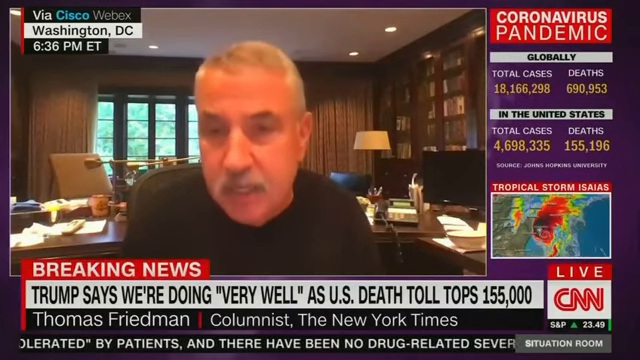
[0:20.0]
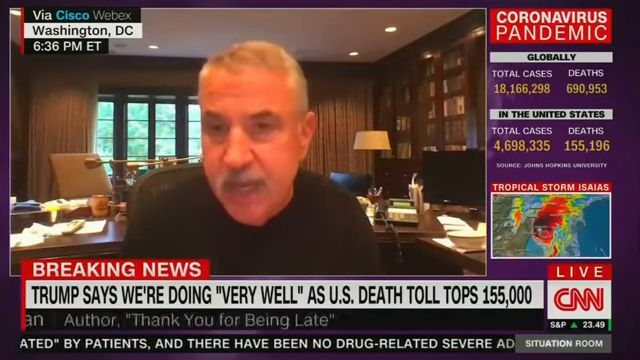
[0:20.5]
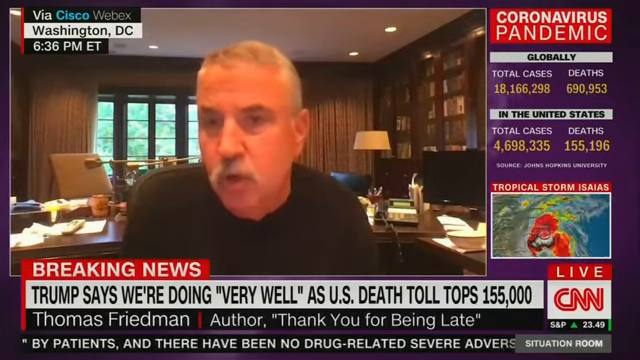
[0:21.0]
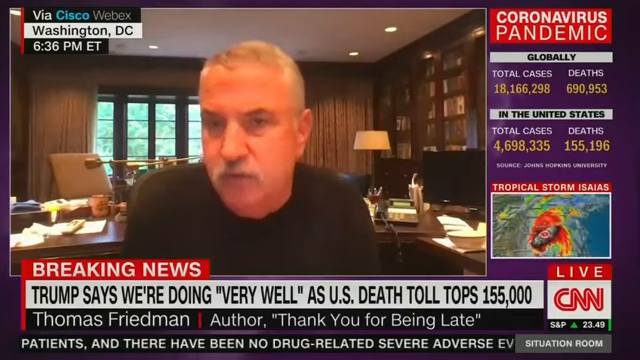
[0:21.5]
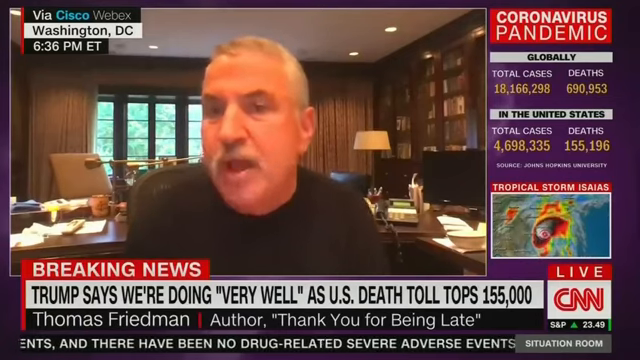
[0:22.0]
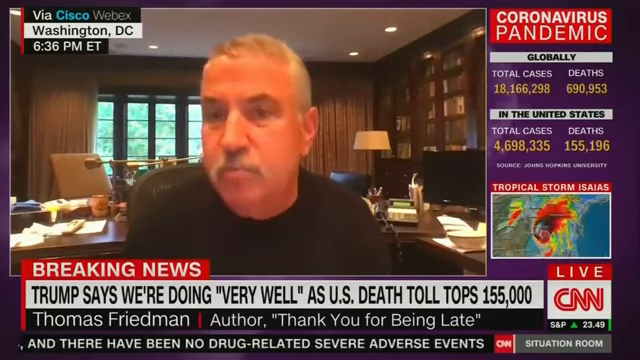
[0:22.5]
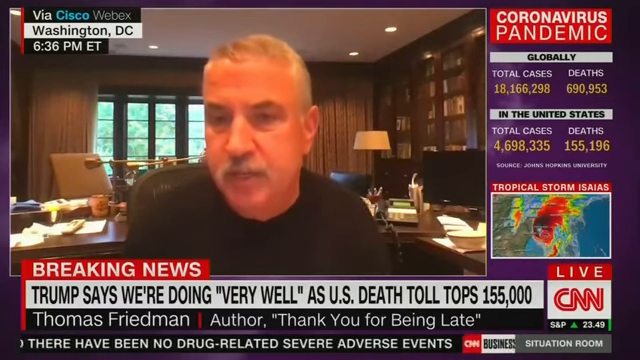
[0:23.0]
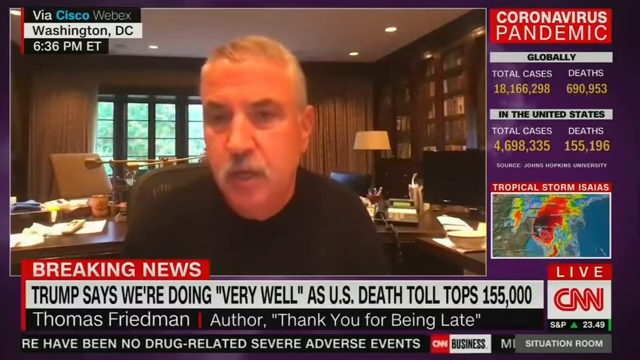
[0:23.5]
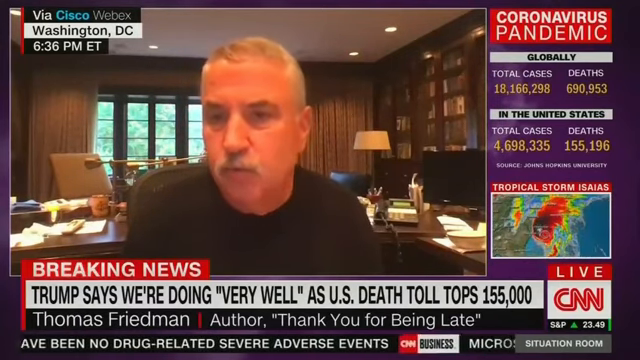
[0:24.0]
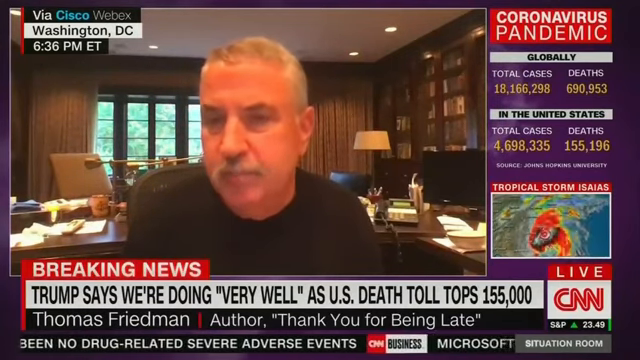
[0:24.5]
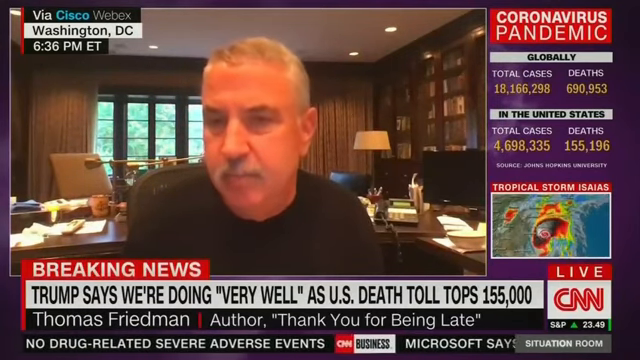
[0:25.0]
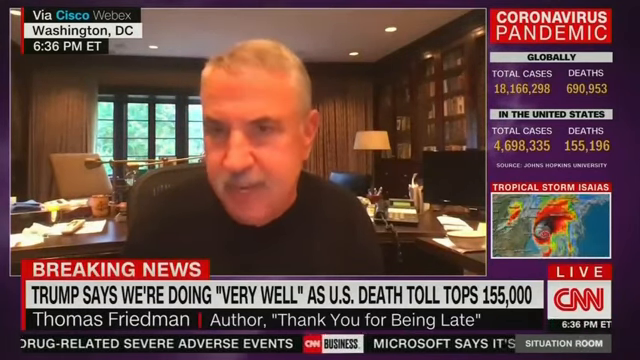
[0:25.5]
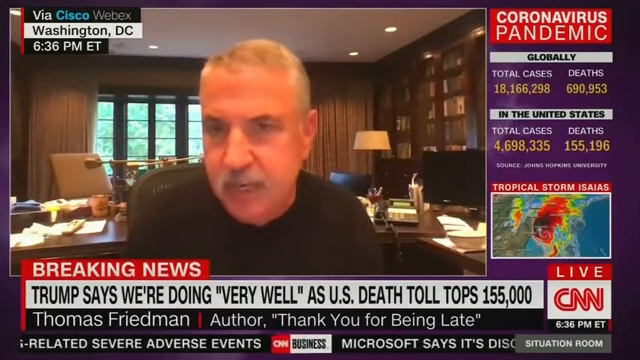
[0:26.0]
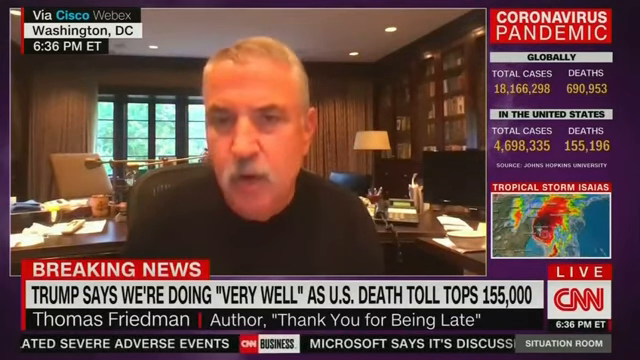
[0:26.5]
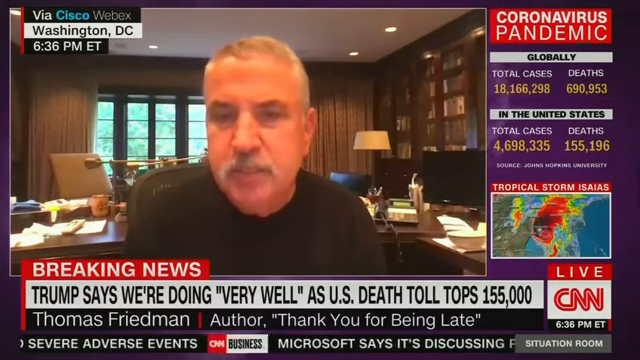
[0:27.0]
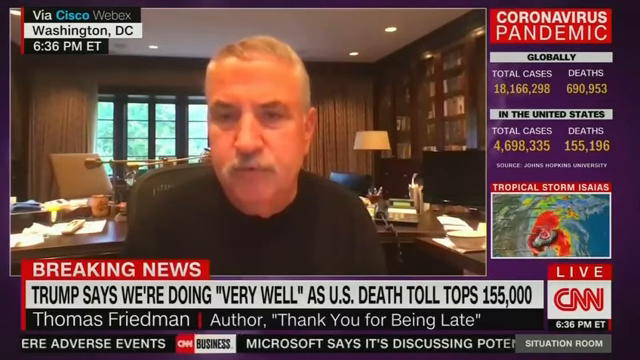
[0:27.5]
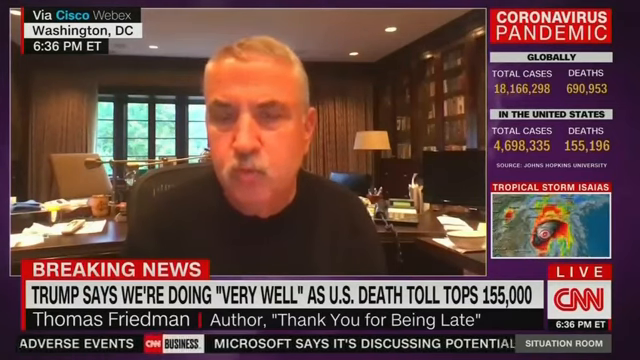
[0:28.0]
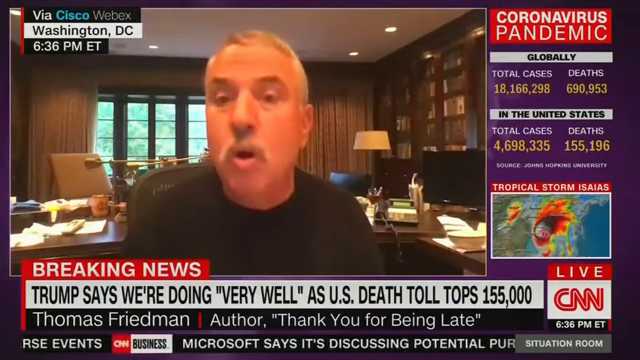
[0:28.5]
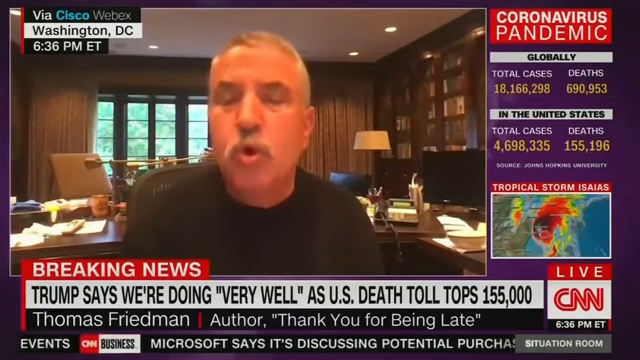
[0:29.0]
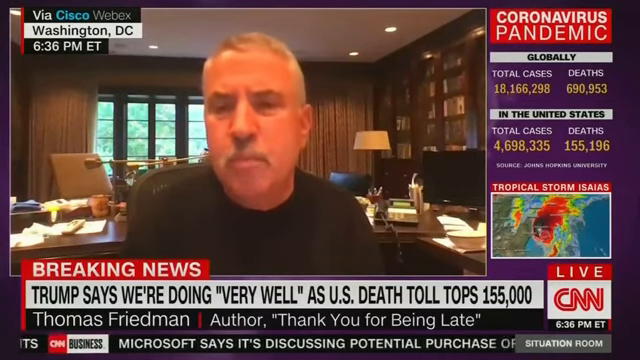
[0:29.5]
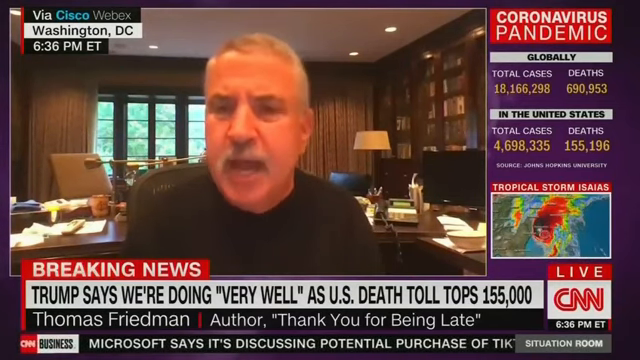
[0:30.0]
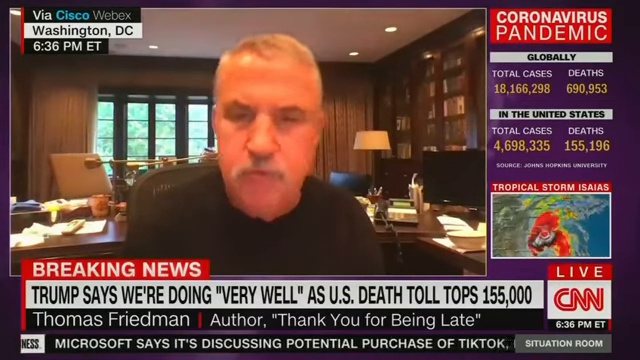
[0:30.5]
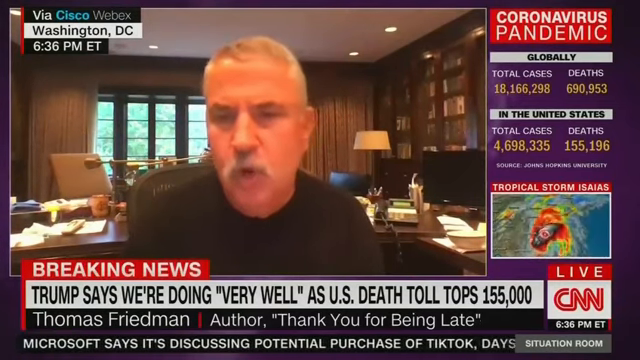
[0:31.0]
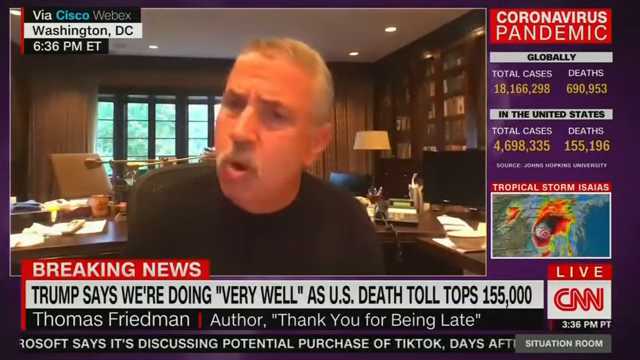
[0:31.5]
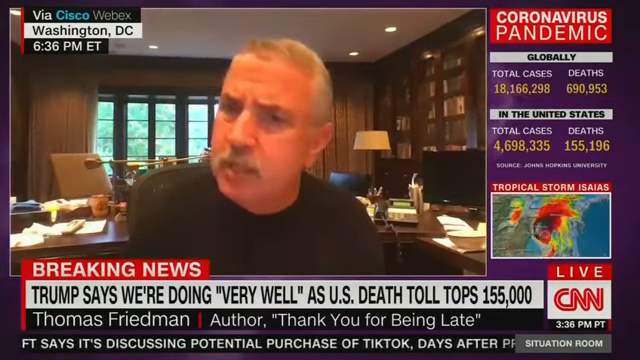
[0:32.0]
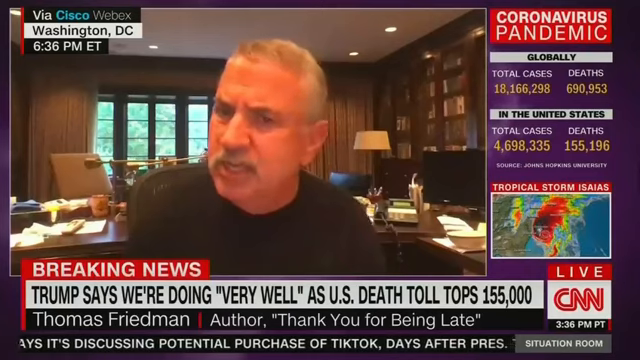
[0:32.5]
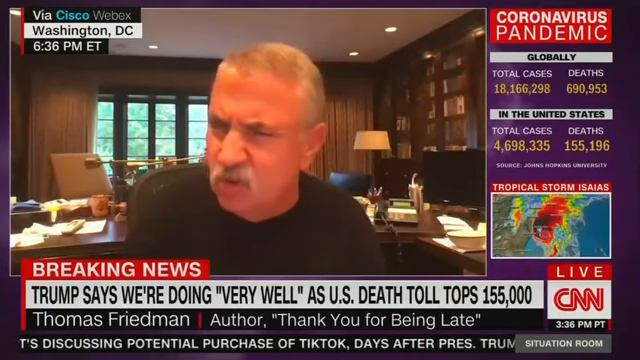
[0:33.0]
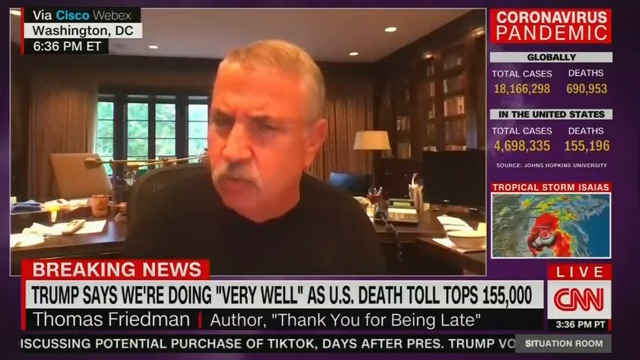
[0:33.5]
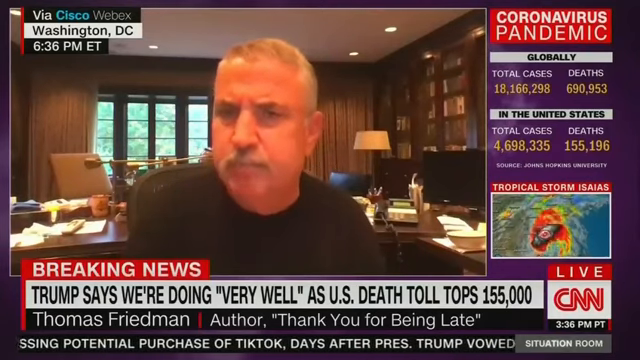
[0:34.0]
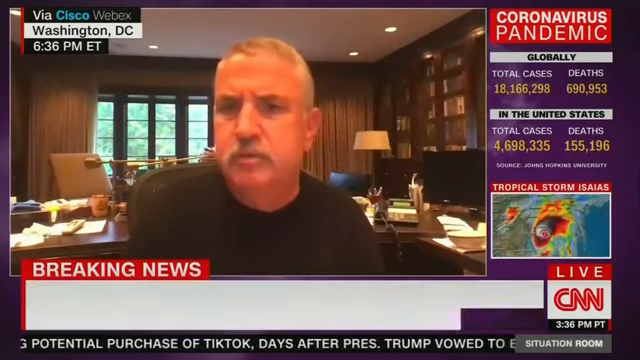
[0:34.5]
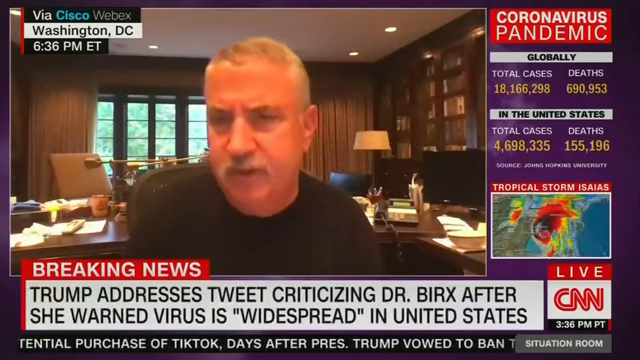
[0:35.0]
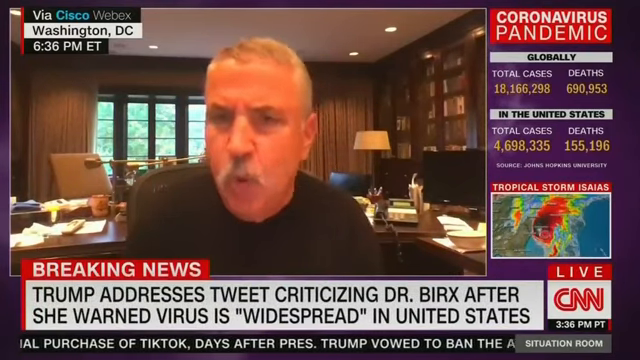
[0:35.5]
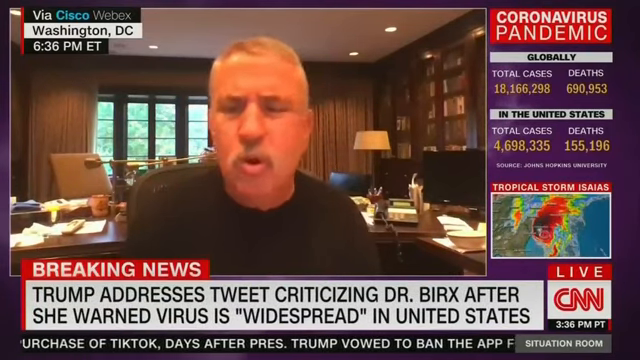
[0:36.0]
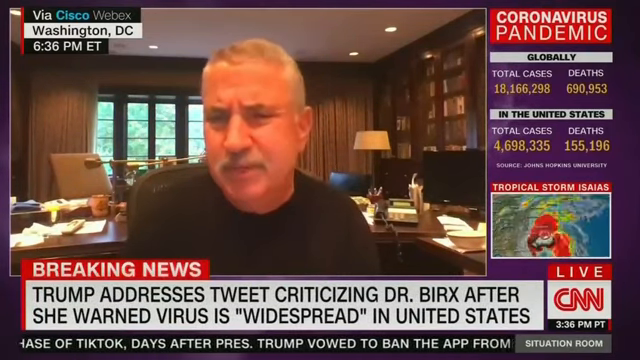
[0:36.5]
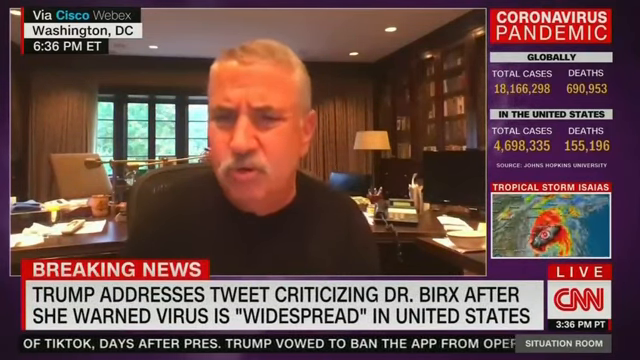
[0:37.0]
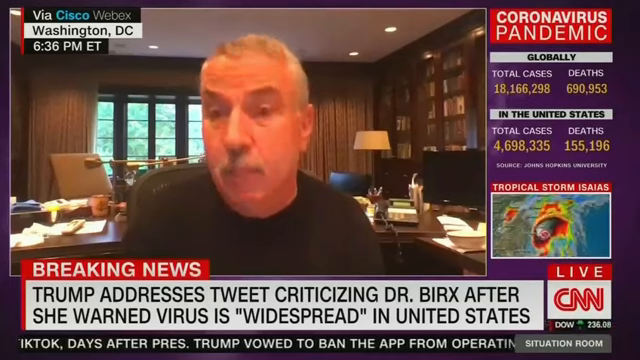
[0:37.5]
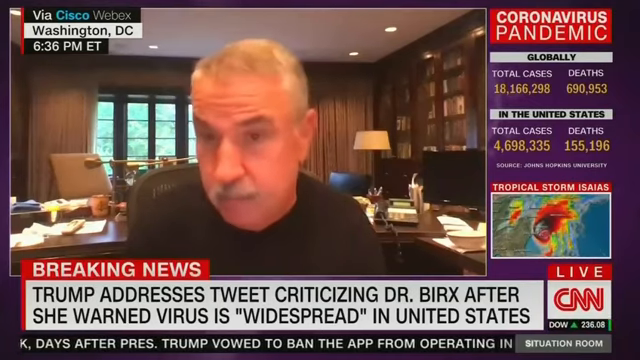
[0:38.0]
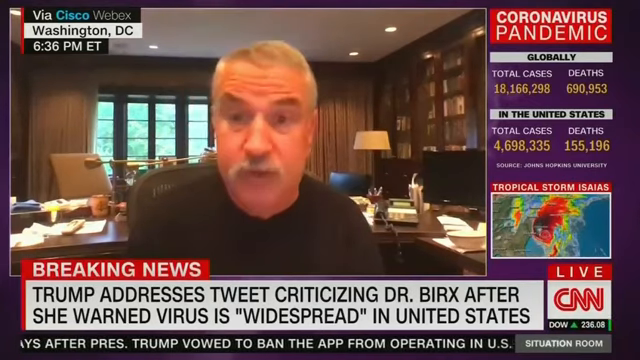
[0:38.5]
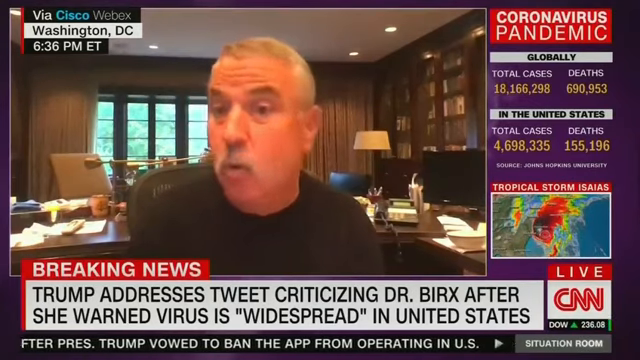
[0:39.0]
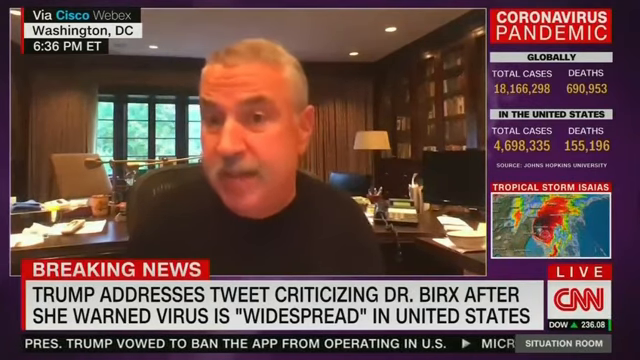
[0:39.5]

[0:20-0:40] A breaking news banner reads "Trump says we're doing very well," with the U.S. death toll topping 155,000. The man is identified as Thomas Friedman, columnist from the New York Times. On-screen text reads "coronavirus pandemic globally" with total cases and deaths, plus total cases and deaths in the United States, and tropical storm Isaias is being tracked. The broadcast is live from CNN. The man looks like he is reporting from his home office, which is pretty huge, and he wears a black top. Text says he is the author. He is talking for most of the shot, apparently about the coronavirus. Another banner reads "Trump addresses tweet criticizing Dr. Birx after she warned virus is widespread in the United States."